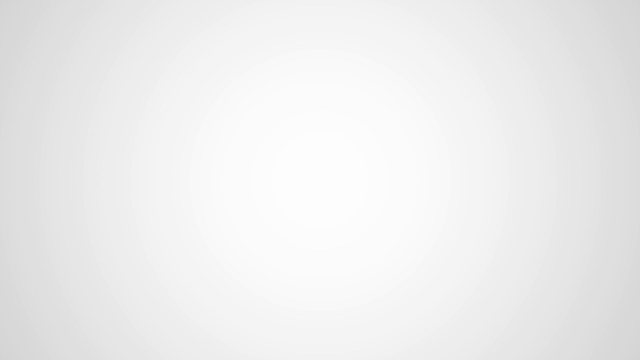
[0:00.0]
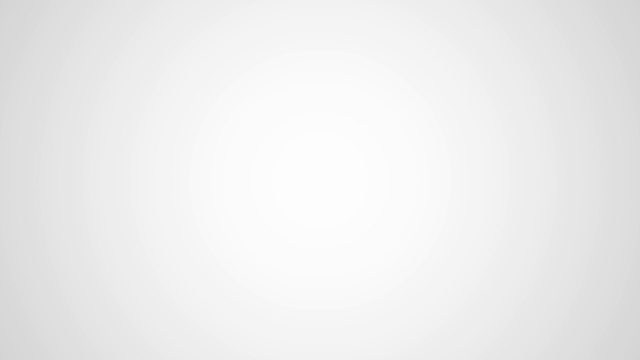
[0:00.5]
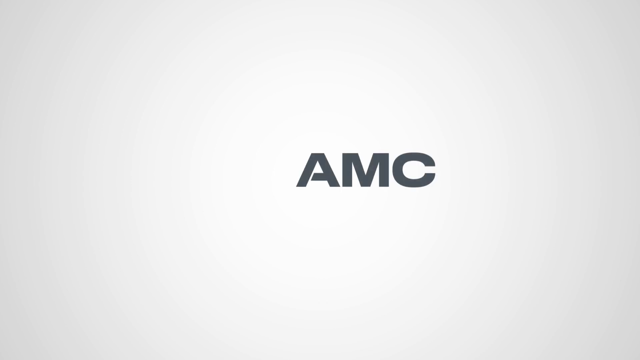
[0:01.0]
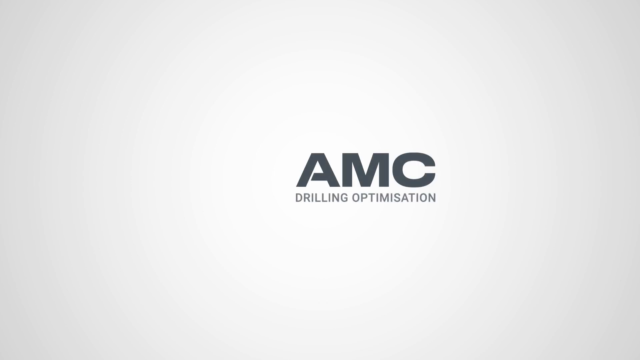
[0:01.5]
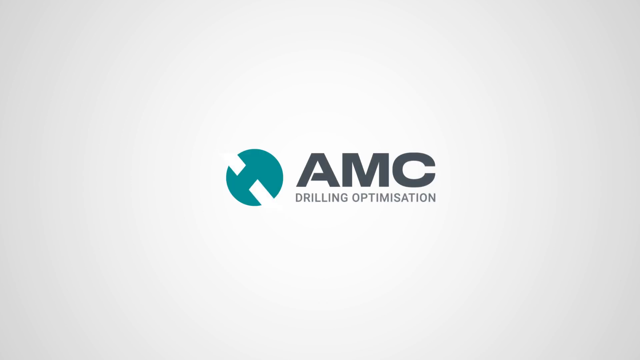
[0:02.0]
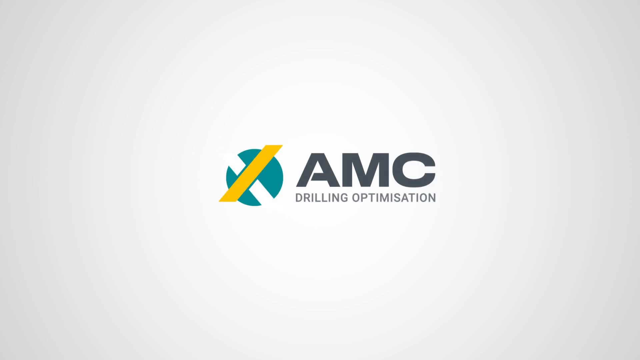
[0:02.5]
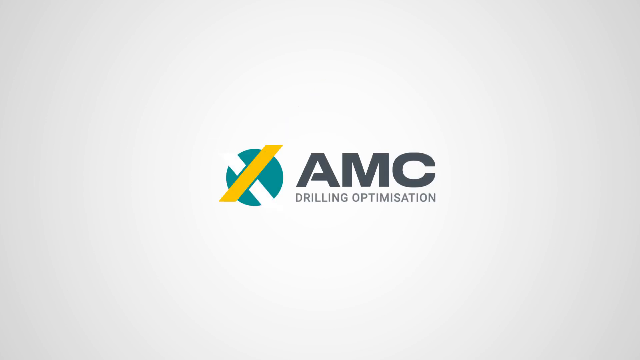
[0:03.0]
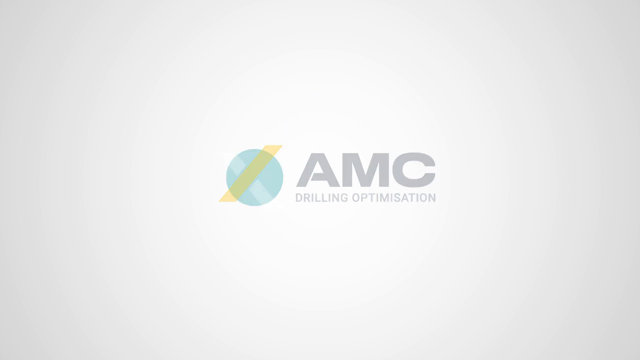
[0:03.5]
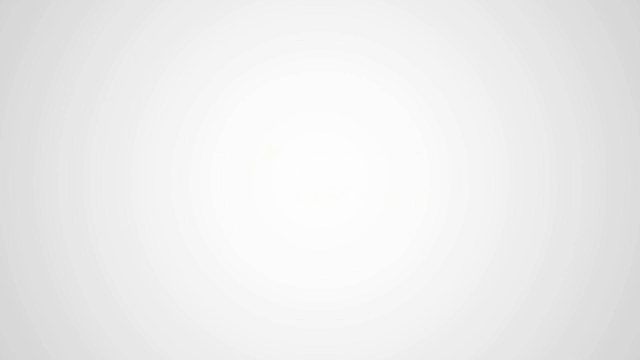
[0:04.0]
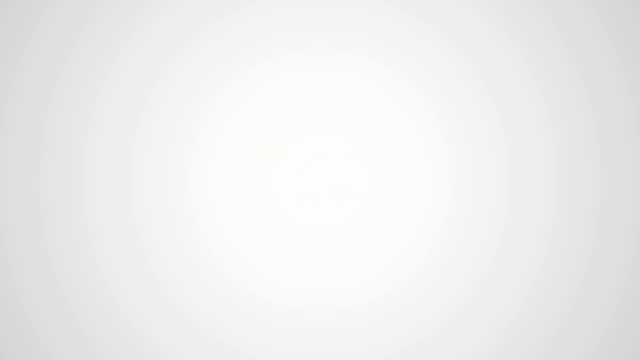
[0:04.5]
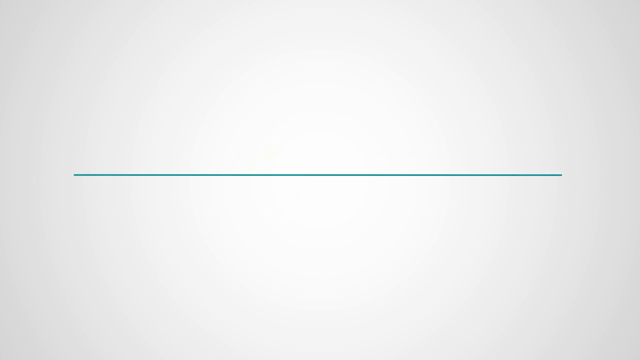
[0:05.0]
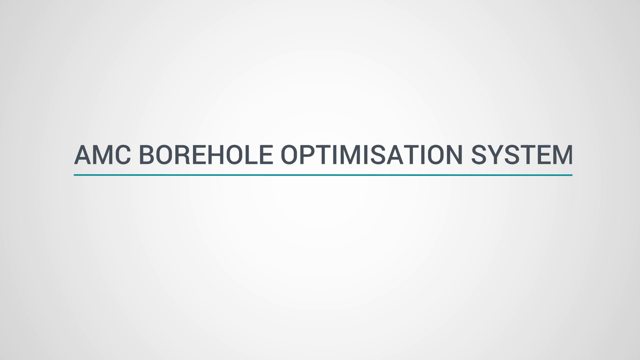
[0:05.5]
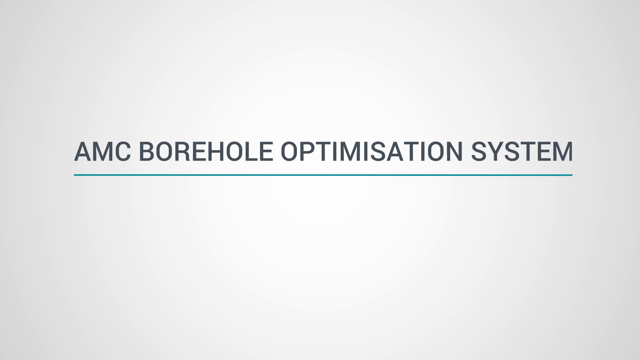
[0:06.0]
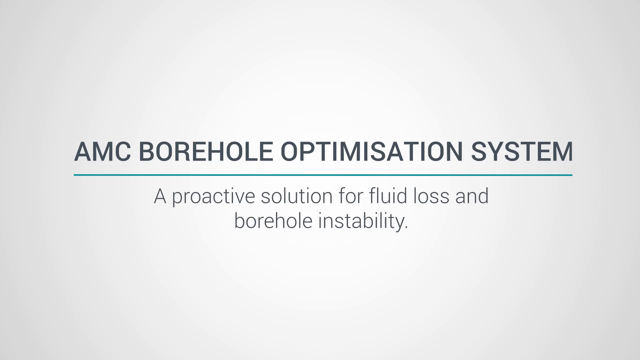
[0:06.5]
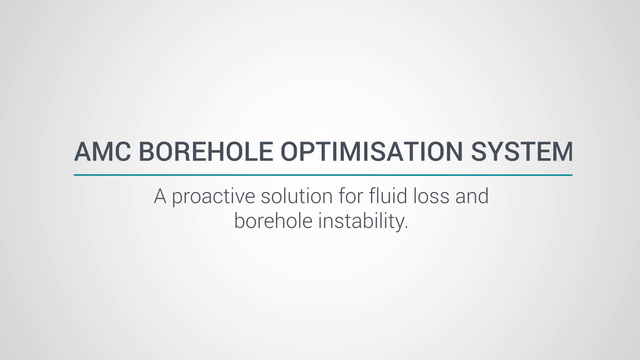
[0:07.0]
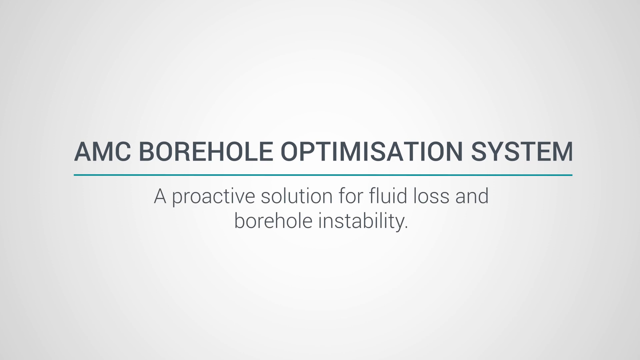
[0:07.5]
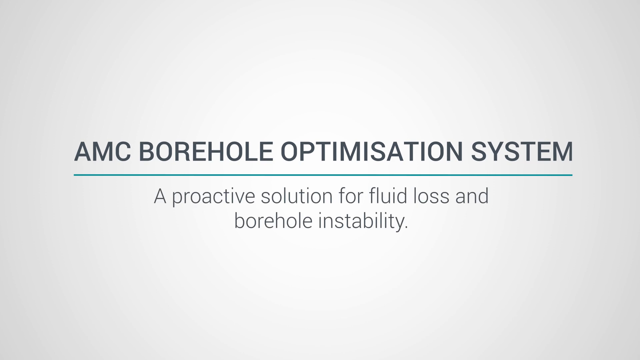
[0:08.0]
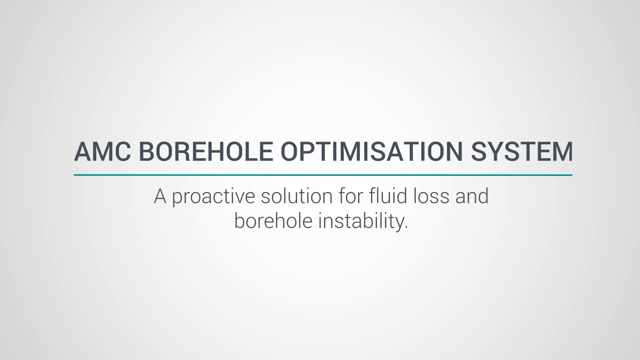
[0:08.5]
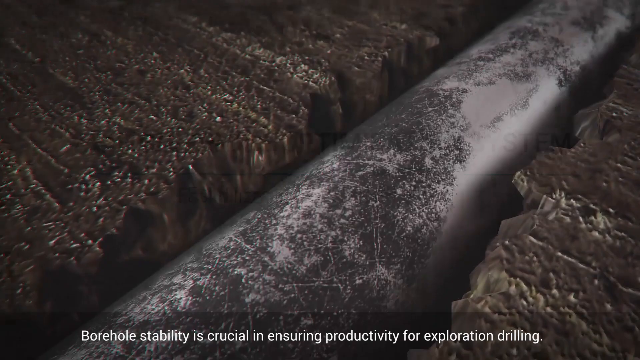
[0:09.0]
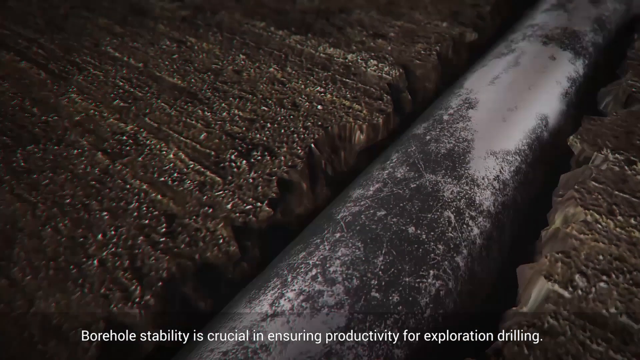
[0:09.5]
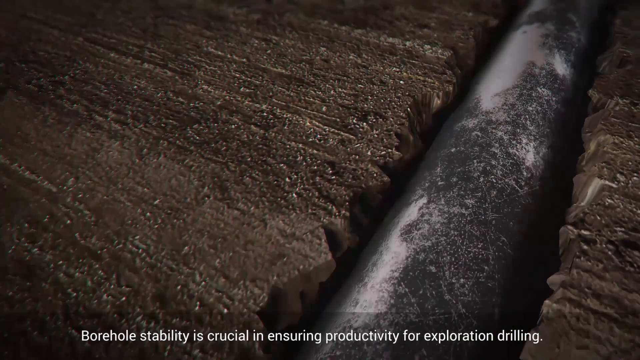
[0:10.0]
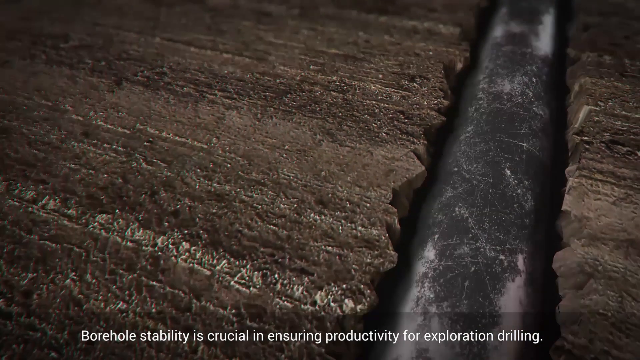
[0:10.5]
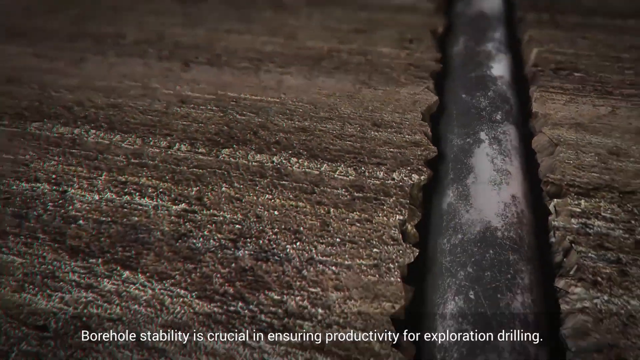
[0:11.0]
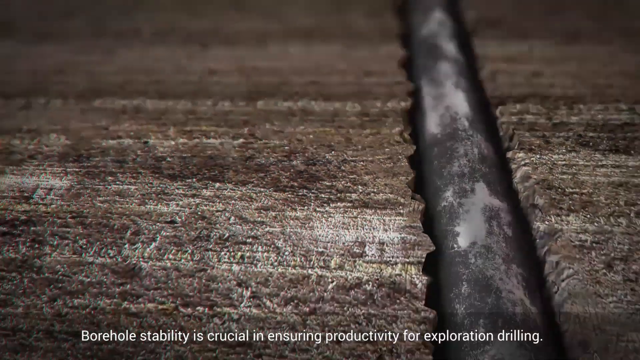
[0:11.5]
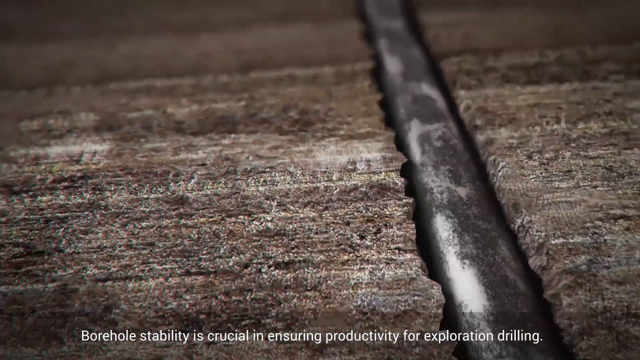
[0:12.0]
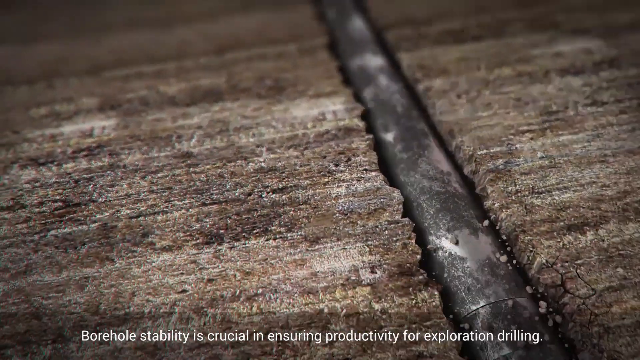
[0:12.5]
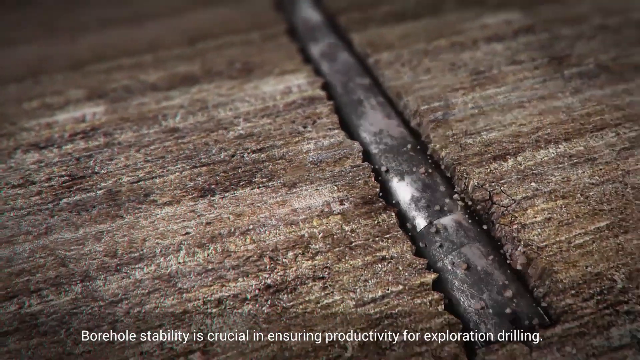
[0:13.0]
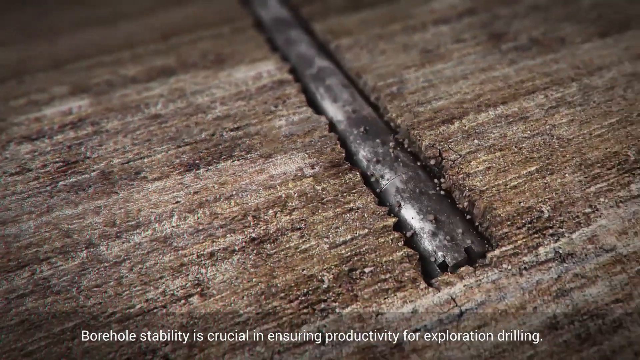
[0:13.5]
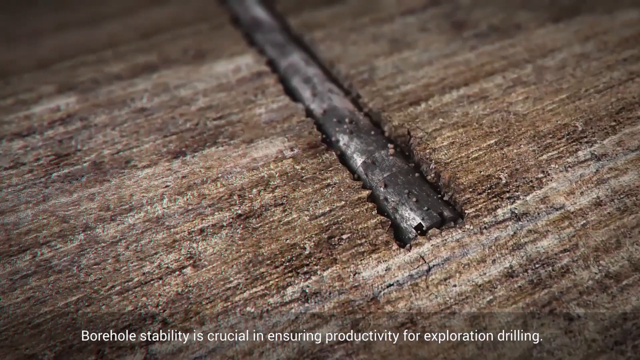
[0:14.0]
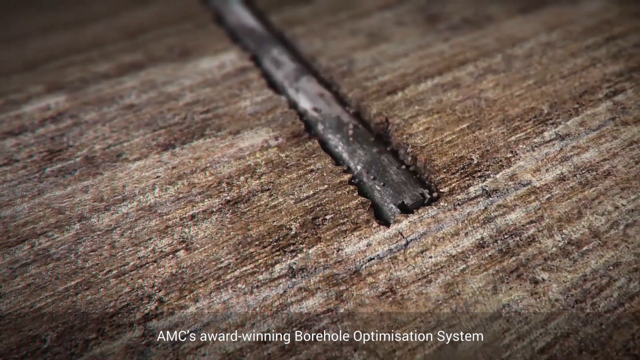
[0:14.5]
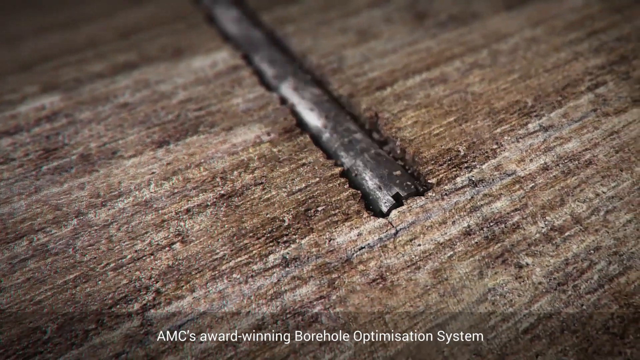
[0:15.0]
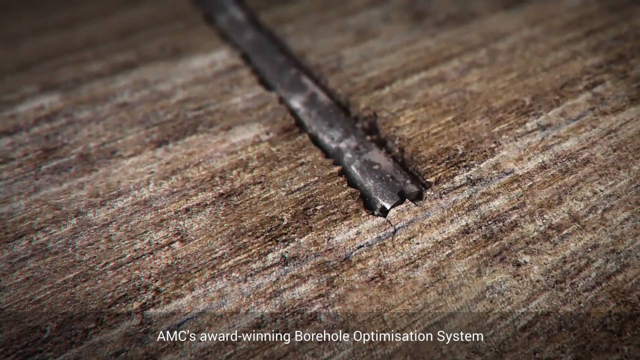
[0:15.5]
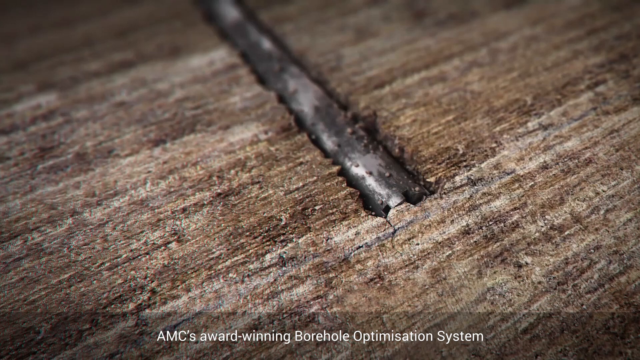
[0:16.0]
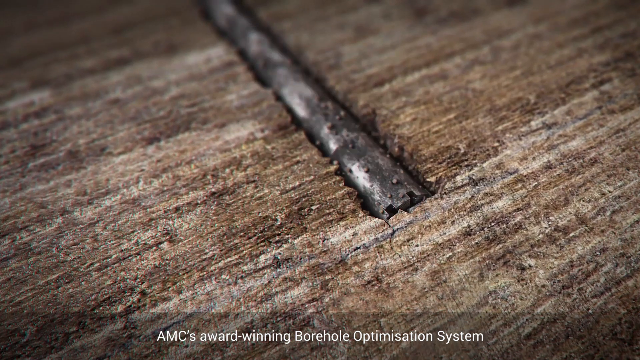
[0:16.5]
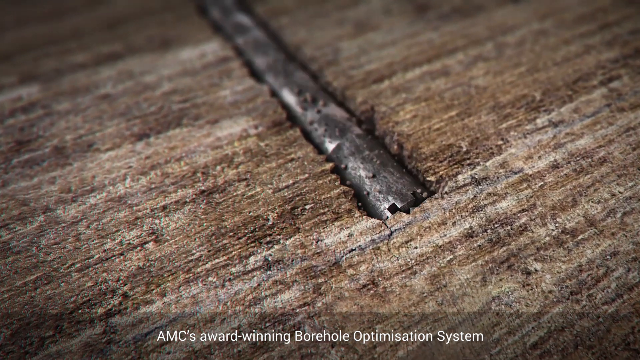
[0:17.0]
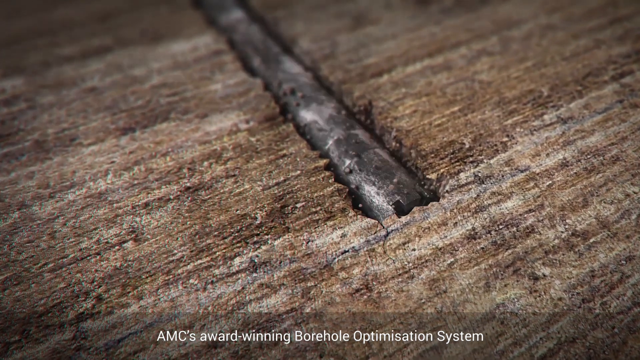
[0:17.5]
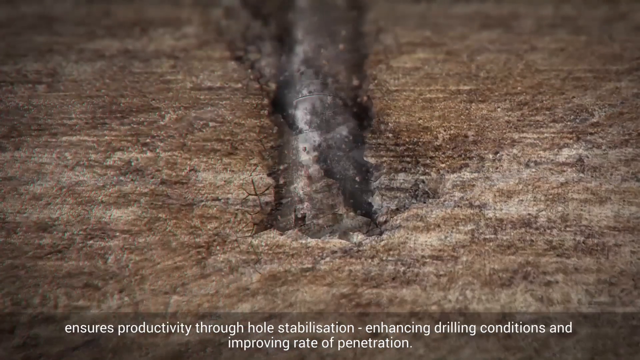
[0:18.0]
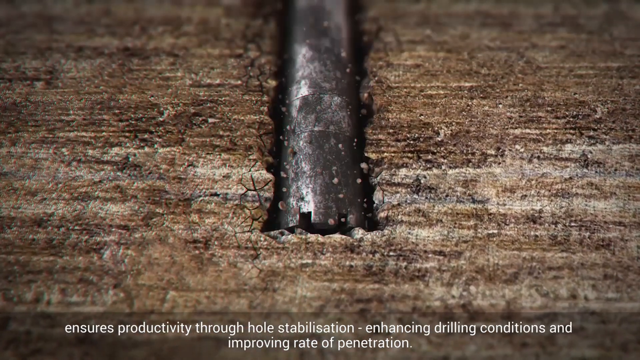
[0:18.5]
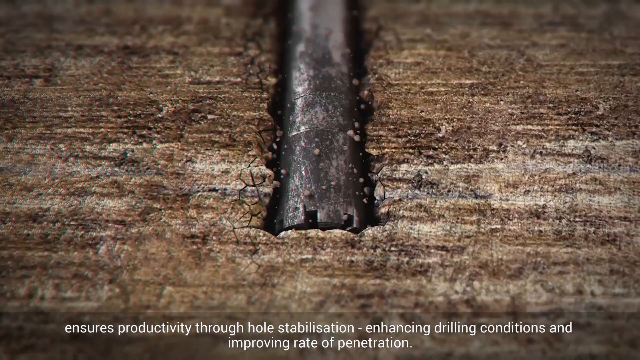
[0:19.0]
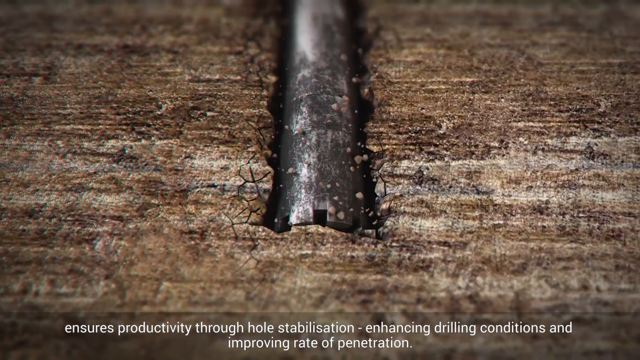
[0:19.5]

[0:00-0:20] A drill bit works its way through some type of material, constantly rotating in a circular motion as it bores through. The material is not clearly identifiable; it could be metal, but it appears to be soil, possibly layers of soil, with striations running through it. The drill is definitely moving through as it bores. The footage looks like a time-lapse, possibly with the drilling slowed down. The metal cylinder tube is shown collecting bits of soil or dust from what it is boring through. The material is mostly brown with striations of white and gray; the layer it is going through now is a more tannish grayish color, and it is probably rock.